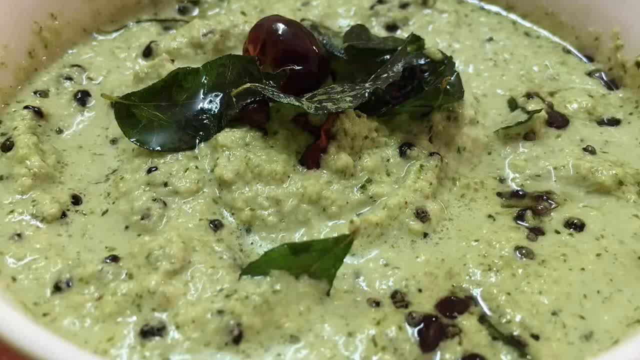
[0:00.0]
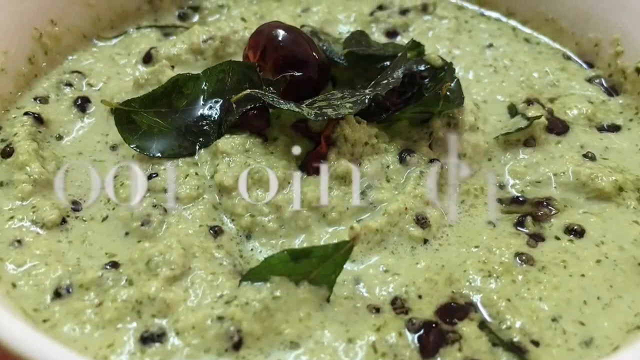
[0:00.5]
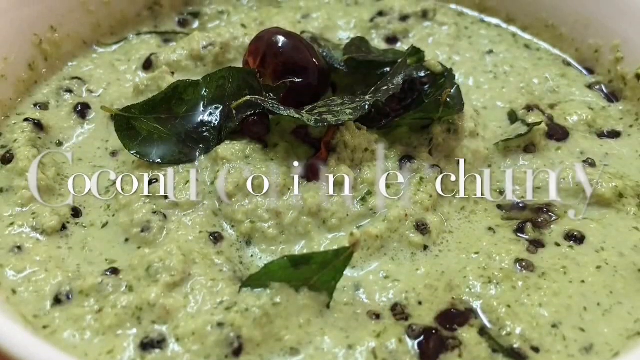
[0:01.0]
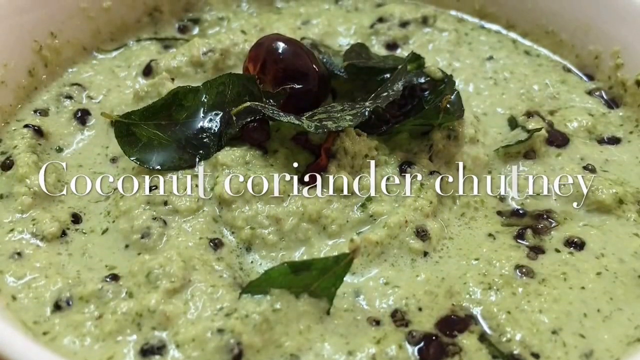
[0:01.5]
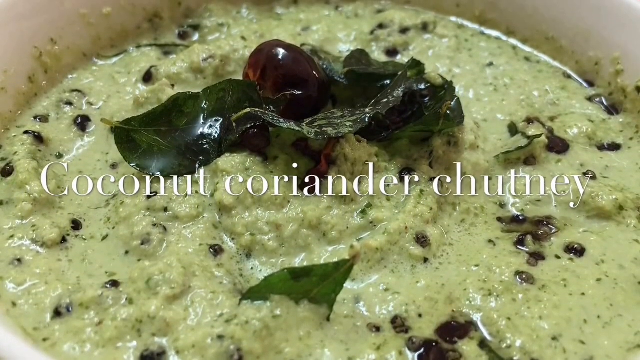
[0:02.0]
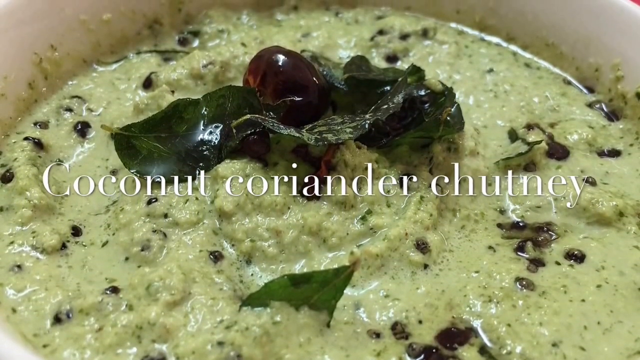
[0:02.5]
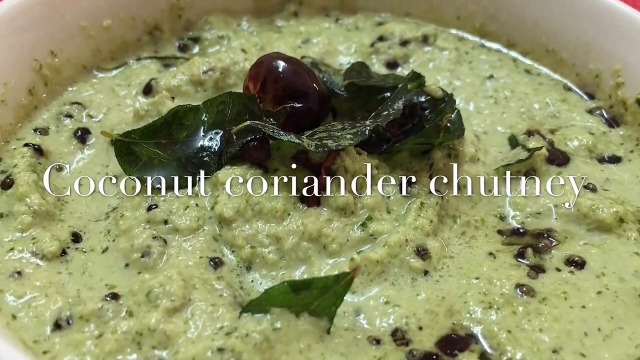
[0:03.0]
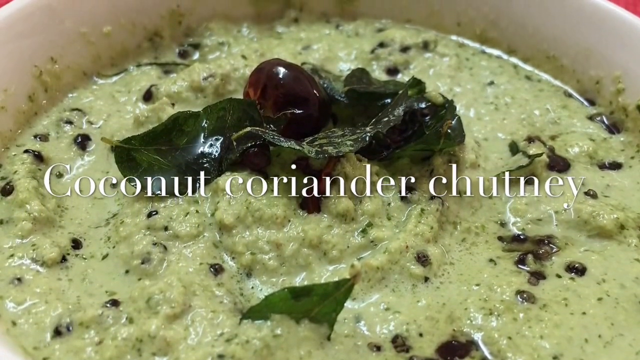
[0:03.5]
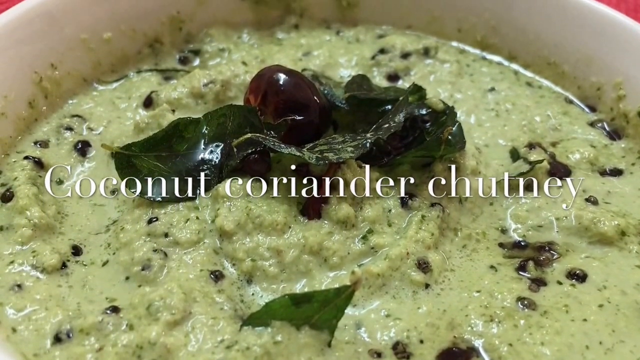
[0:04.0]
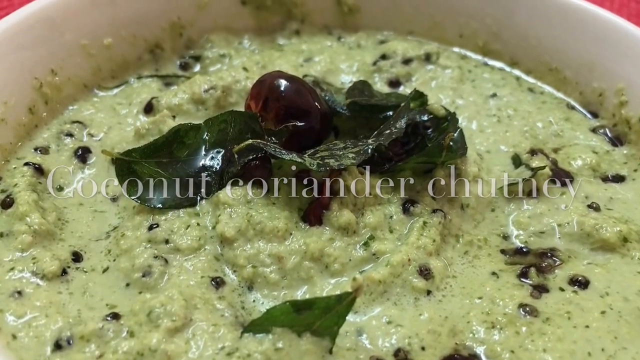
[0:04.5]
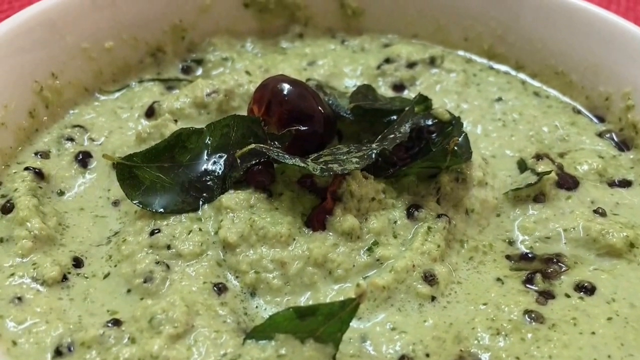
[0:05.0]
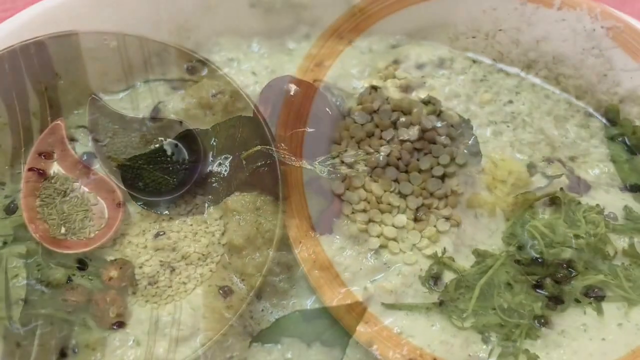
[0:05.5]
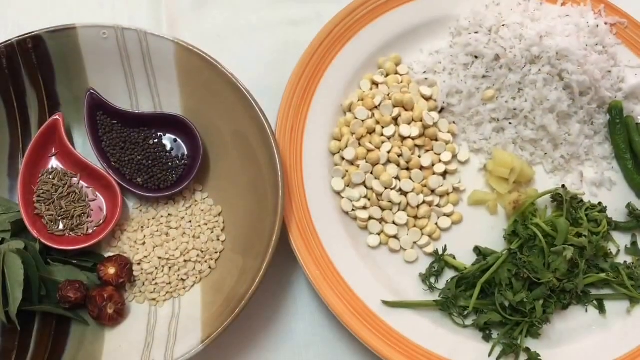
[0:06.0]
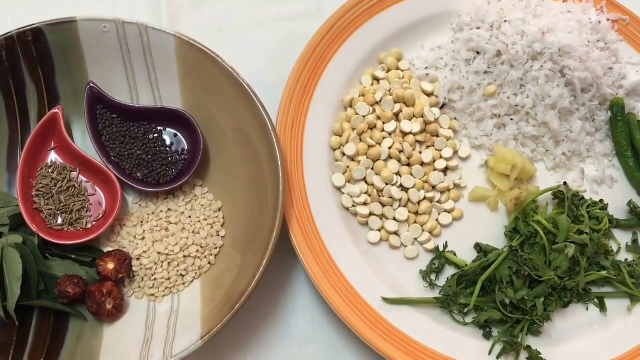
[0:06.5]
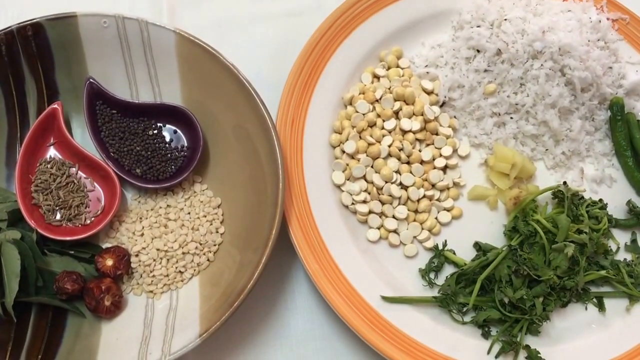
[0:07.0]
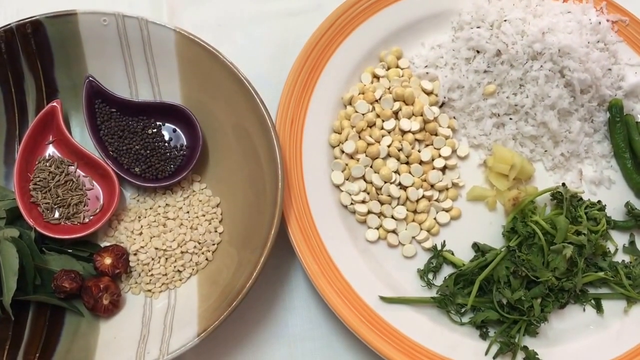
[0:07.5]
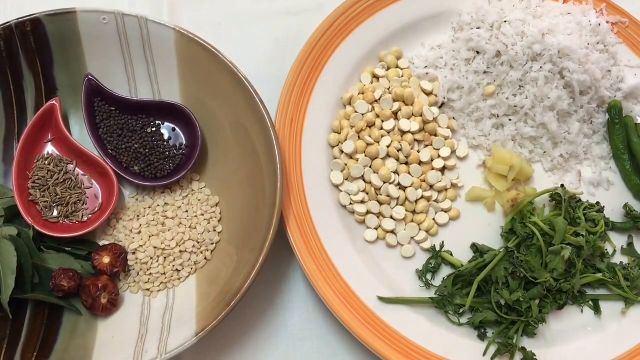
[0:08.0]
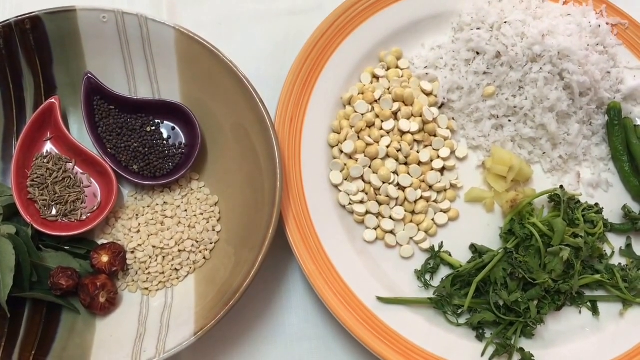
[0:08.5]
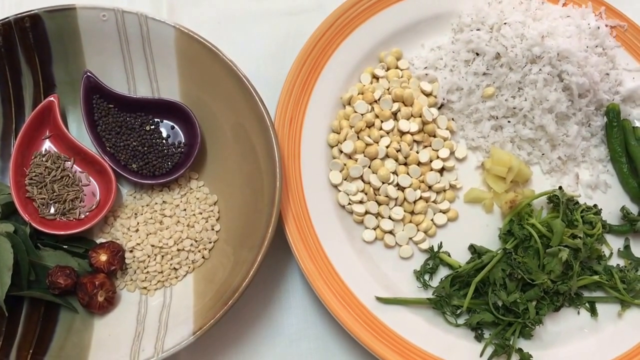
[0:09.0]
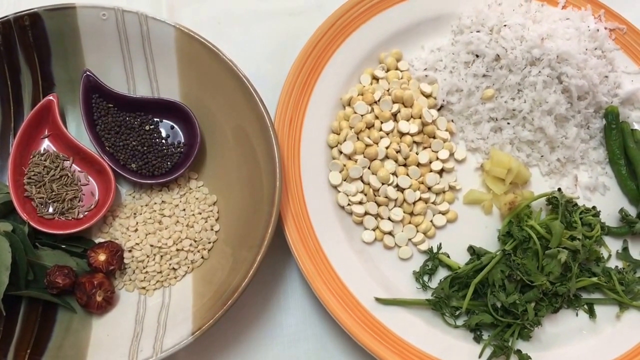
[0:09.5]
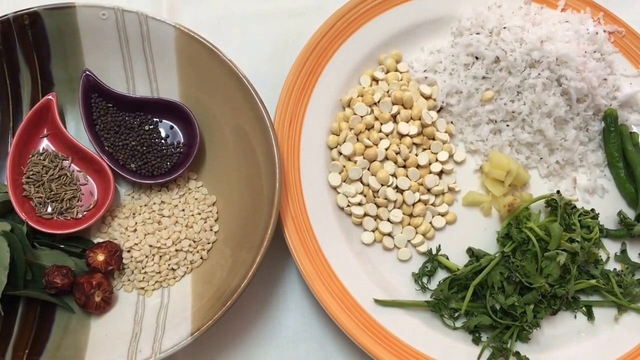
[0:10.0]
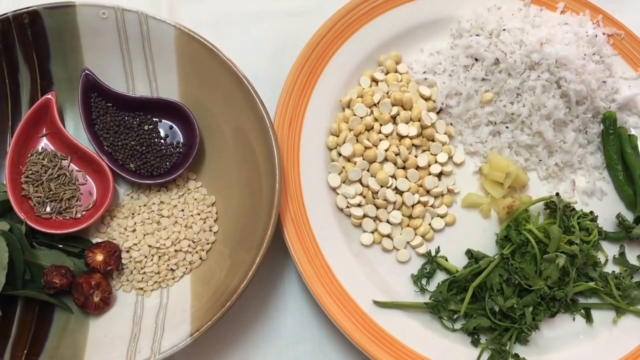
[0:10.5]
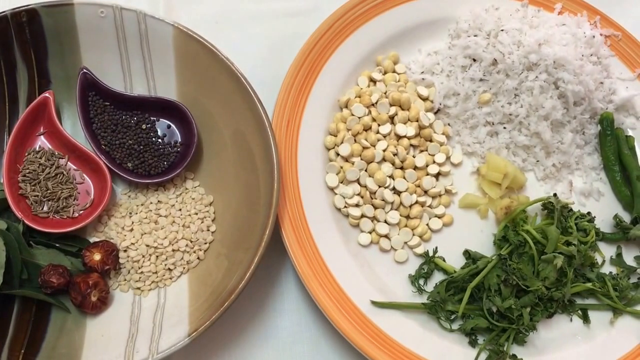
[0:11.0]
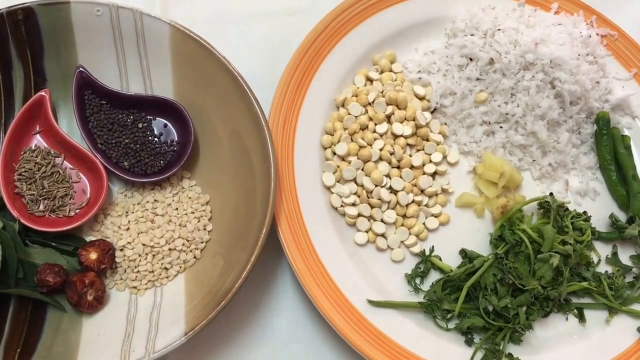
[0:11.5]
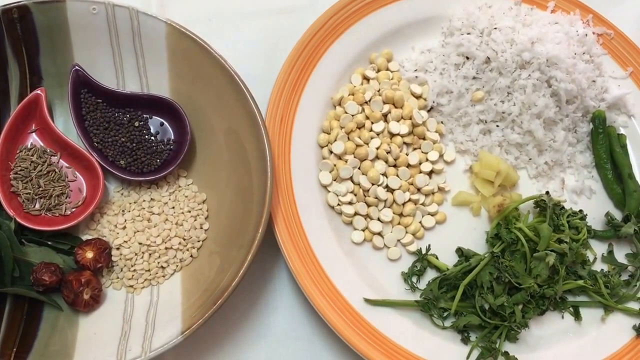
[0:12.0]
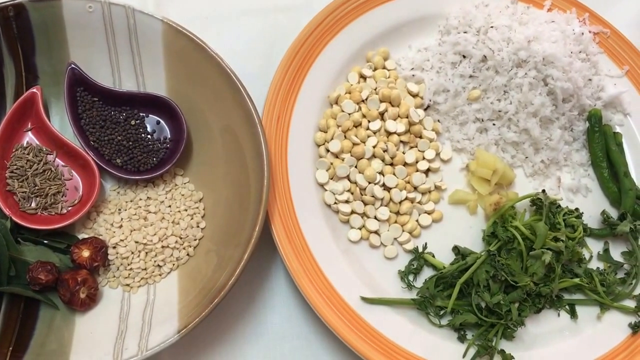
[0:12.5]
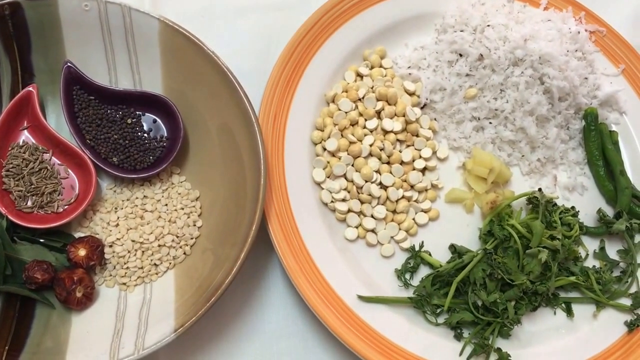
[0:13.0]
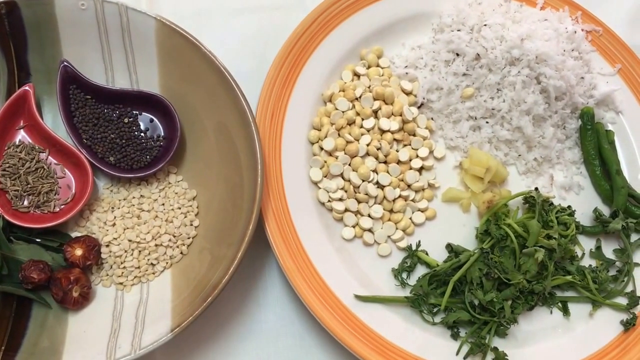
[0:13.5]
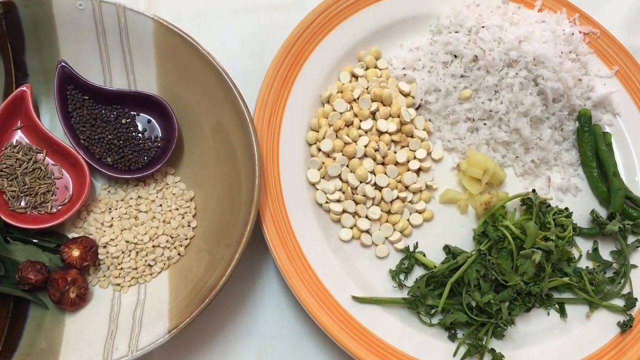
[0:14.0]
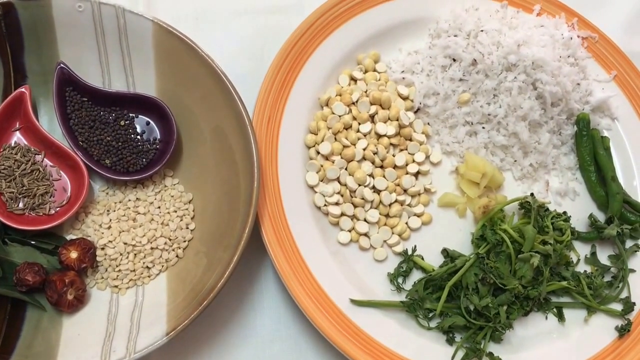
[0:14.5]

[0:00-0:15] A finished coconut coriander chutney is shown, along with a suggestion of how to garnish it, and the ingredients are also visible. They are mostly dry ingredients, though there is cilantro, coconut and possibly green beans. There are also black peppercorns and lentils, and on the left plate there is another kind of leaf that might be a bay leaf or possibly sage.